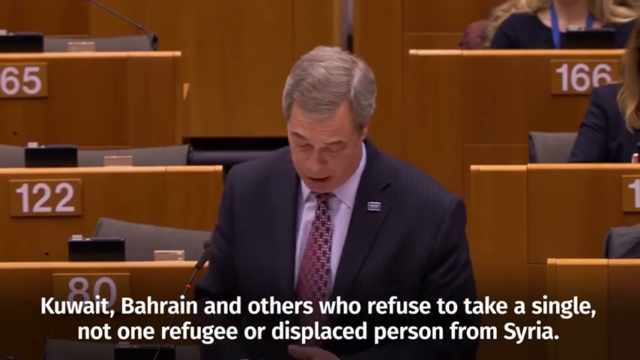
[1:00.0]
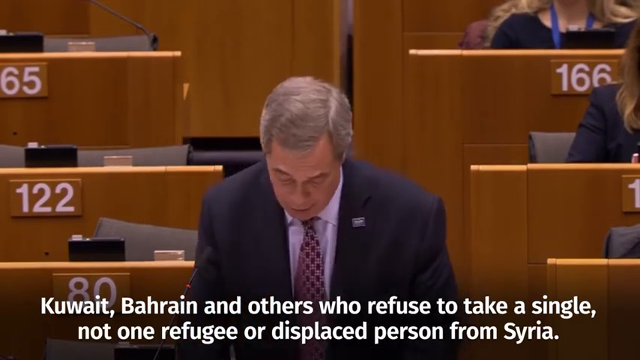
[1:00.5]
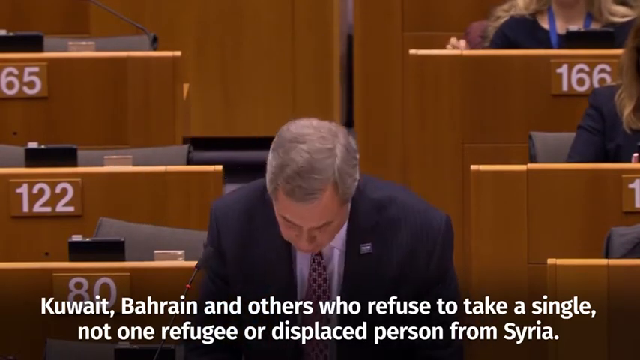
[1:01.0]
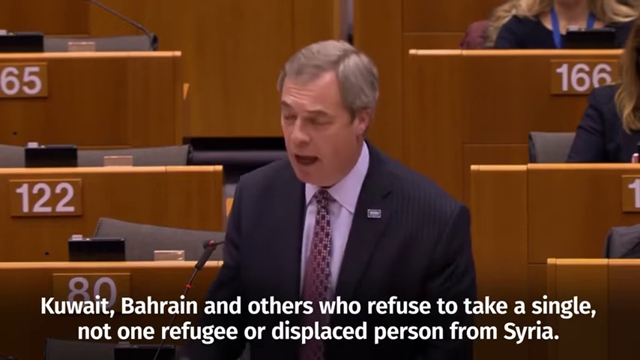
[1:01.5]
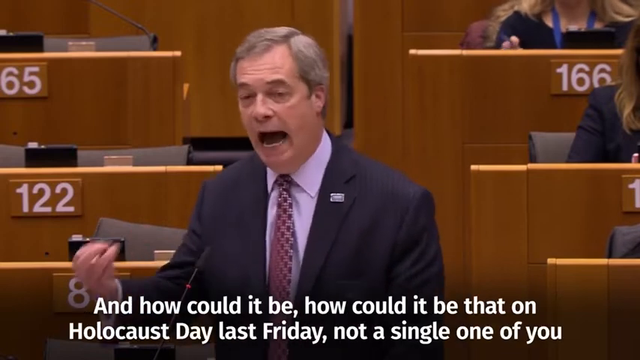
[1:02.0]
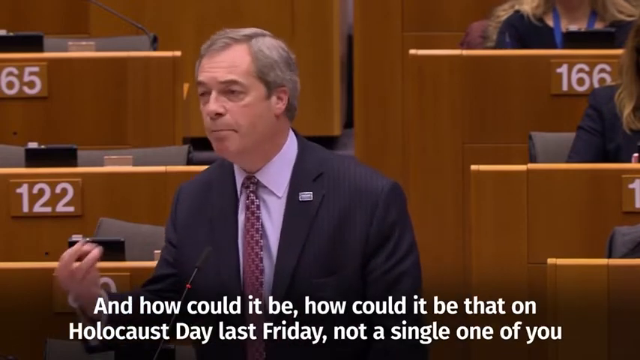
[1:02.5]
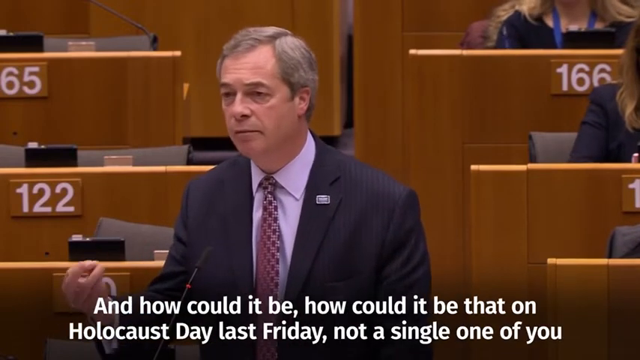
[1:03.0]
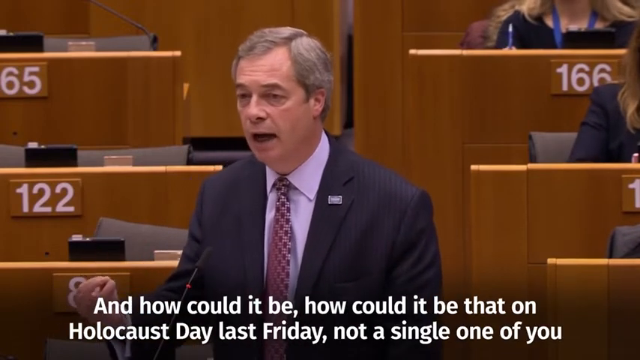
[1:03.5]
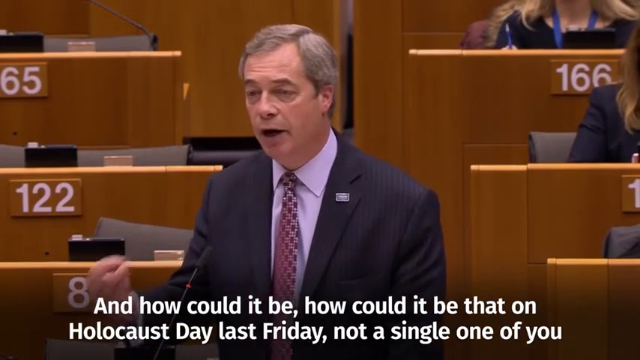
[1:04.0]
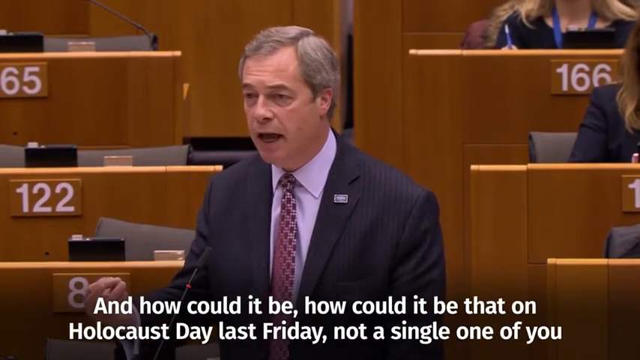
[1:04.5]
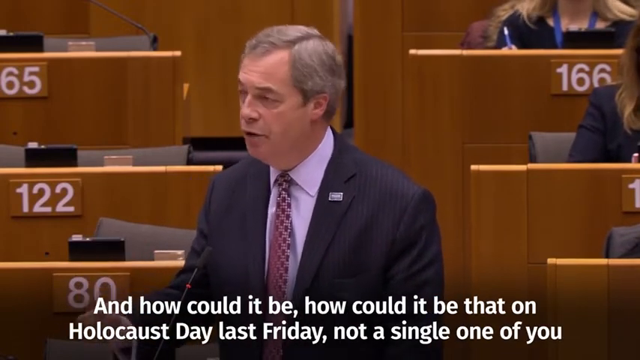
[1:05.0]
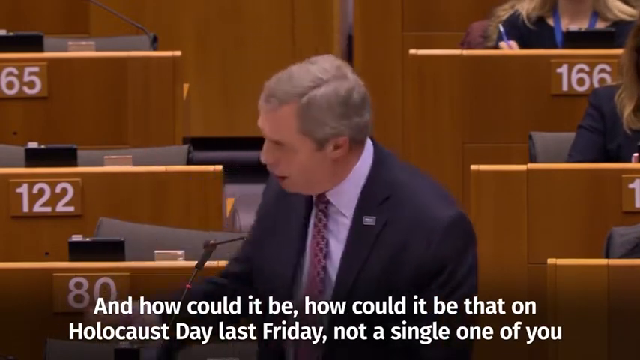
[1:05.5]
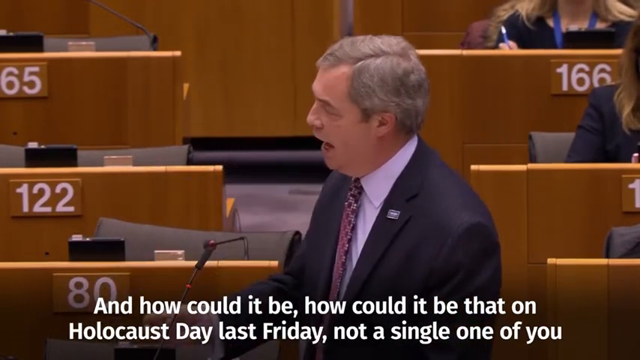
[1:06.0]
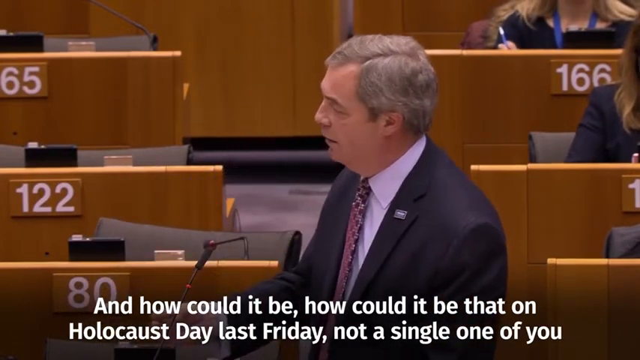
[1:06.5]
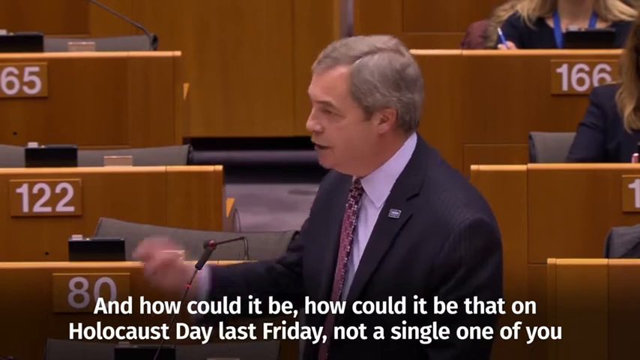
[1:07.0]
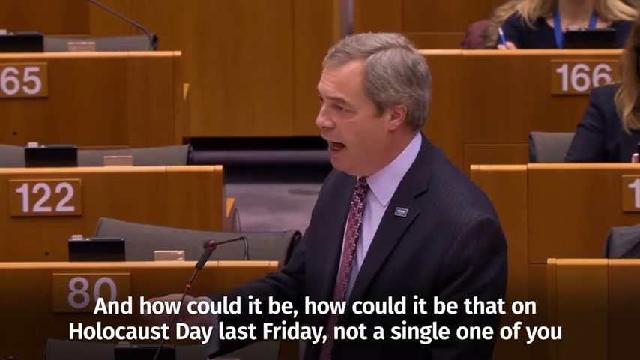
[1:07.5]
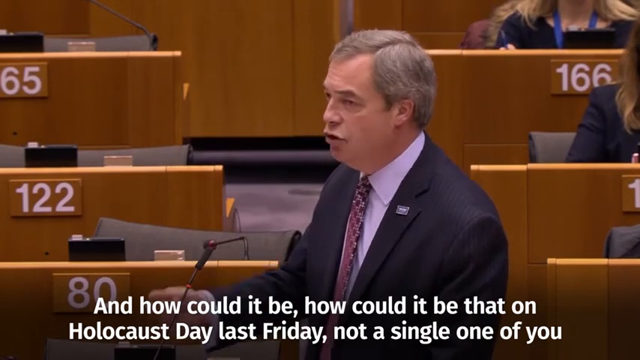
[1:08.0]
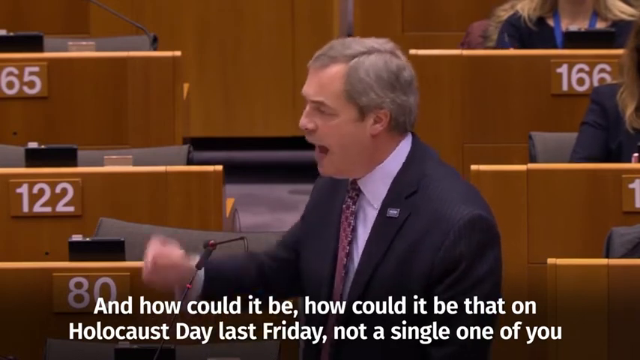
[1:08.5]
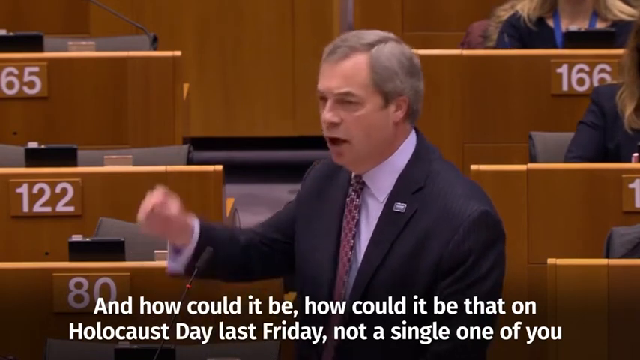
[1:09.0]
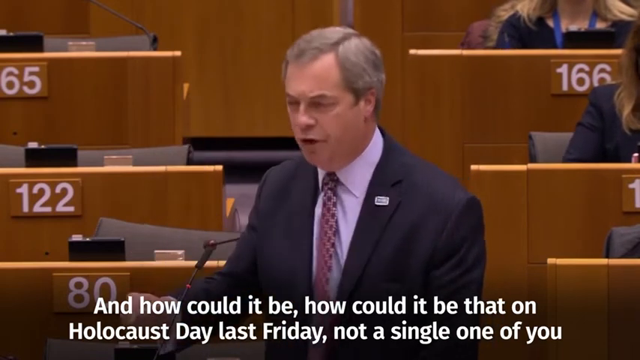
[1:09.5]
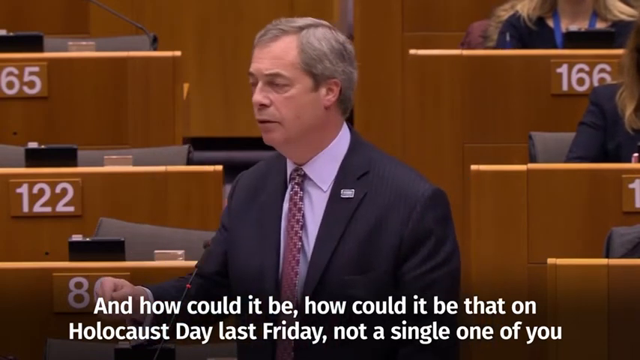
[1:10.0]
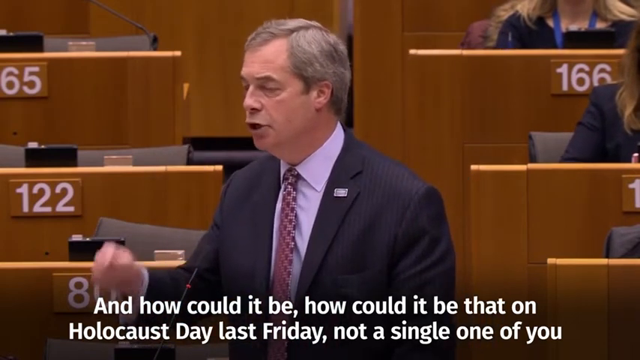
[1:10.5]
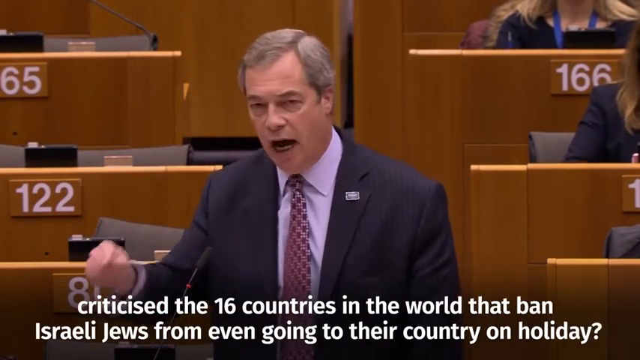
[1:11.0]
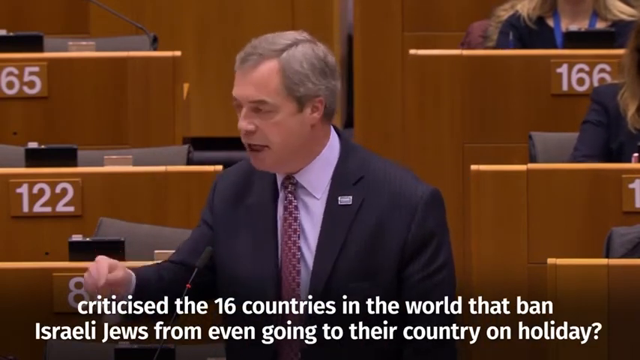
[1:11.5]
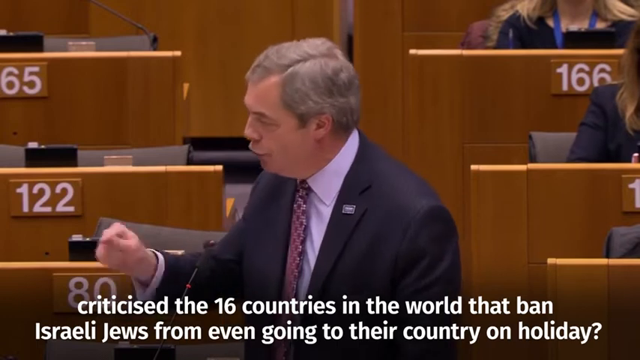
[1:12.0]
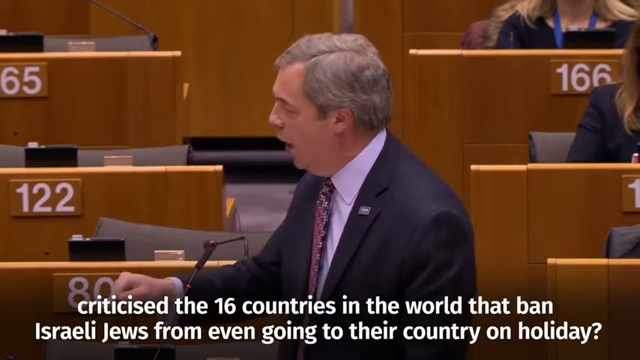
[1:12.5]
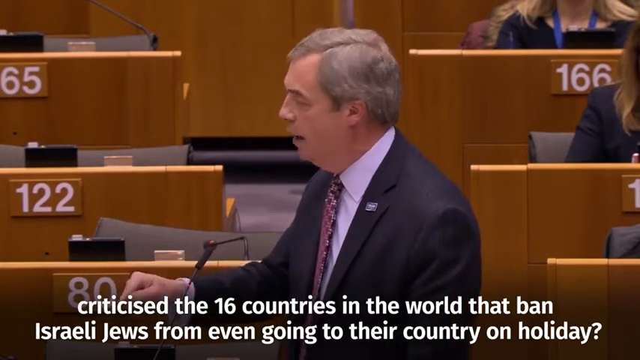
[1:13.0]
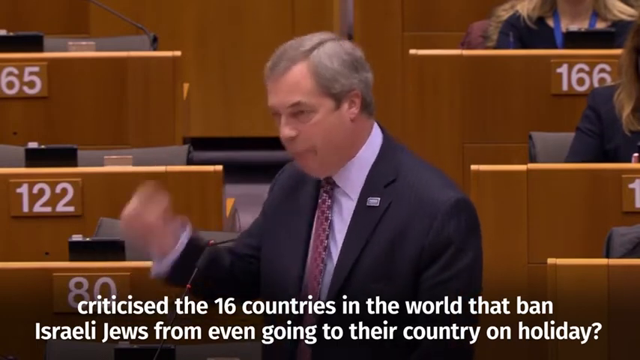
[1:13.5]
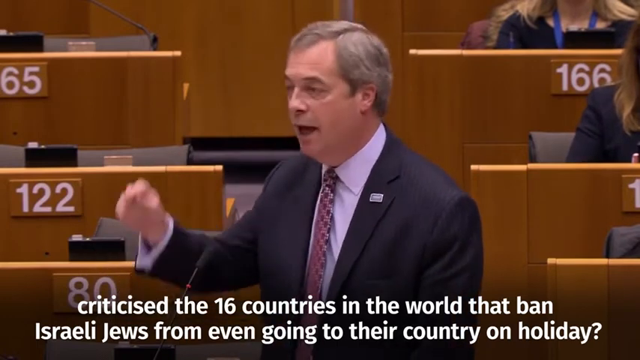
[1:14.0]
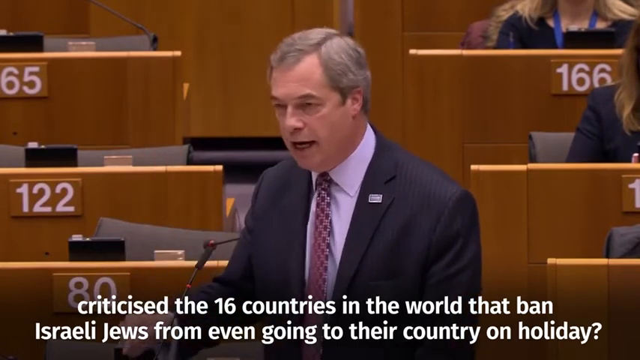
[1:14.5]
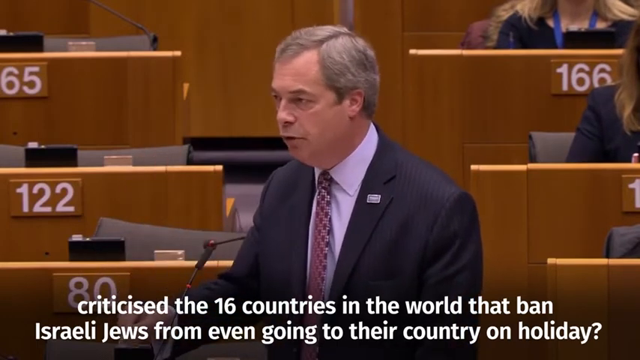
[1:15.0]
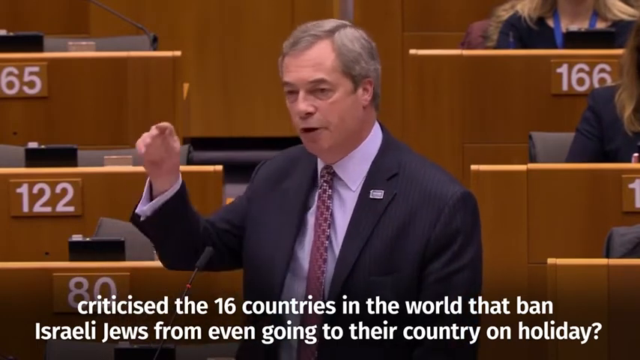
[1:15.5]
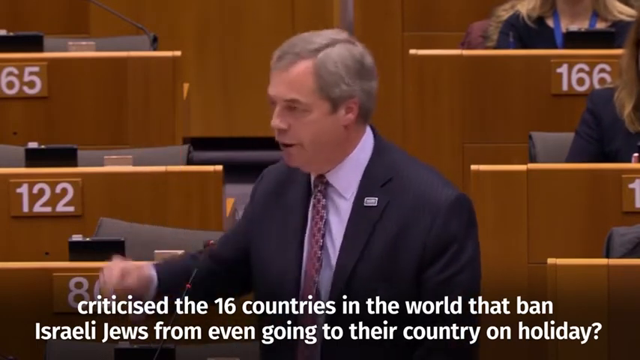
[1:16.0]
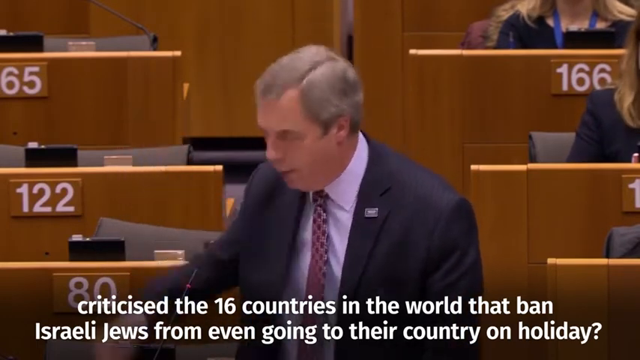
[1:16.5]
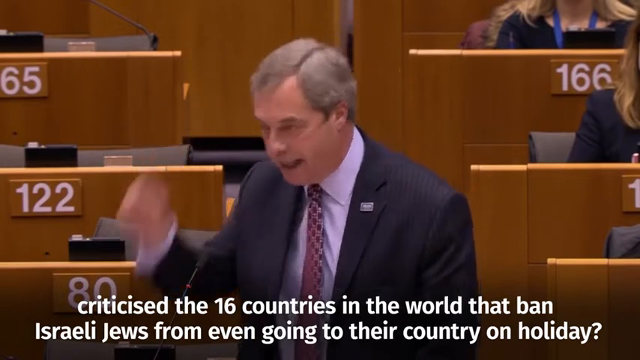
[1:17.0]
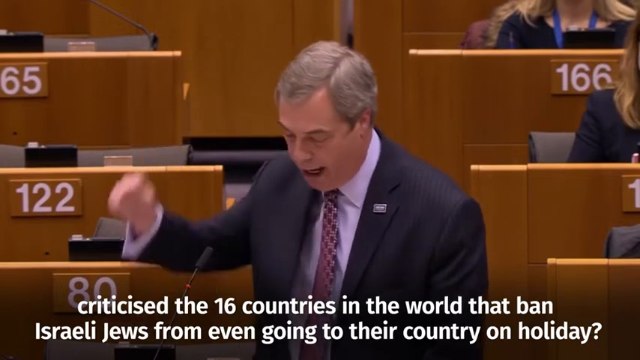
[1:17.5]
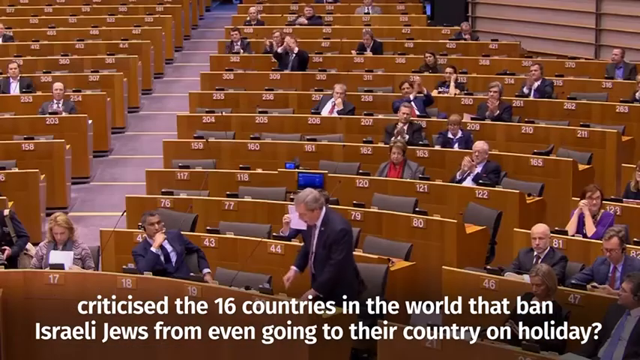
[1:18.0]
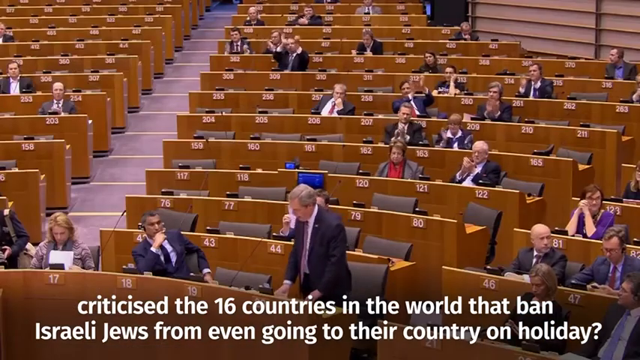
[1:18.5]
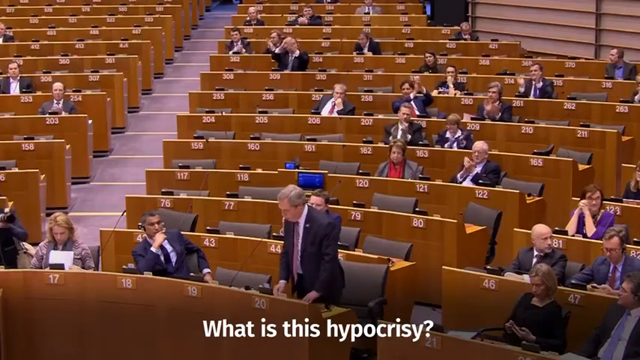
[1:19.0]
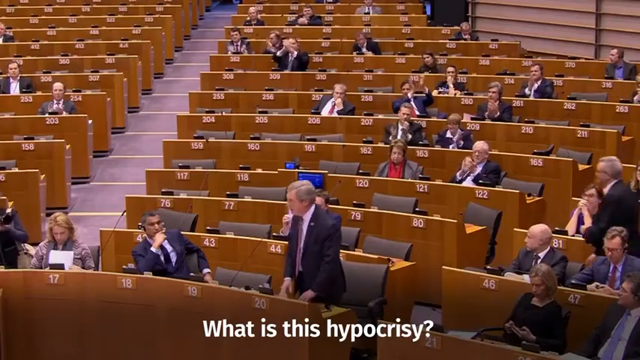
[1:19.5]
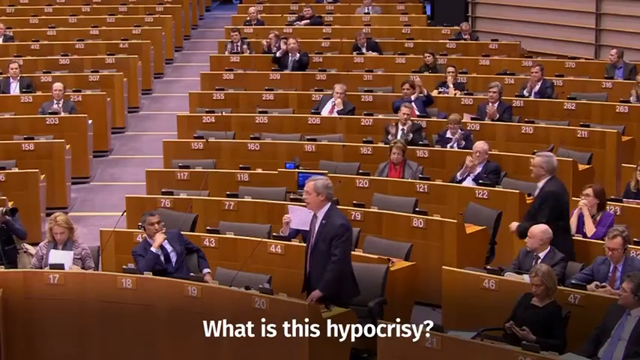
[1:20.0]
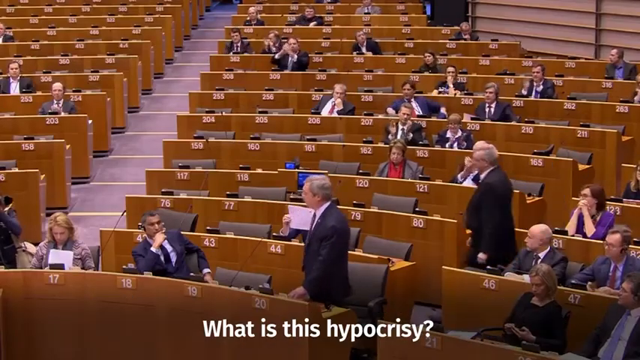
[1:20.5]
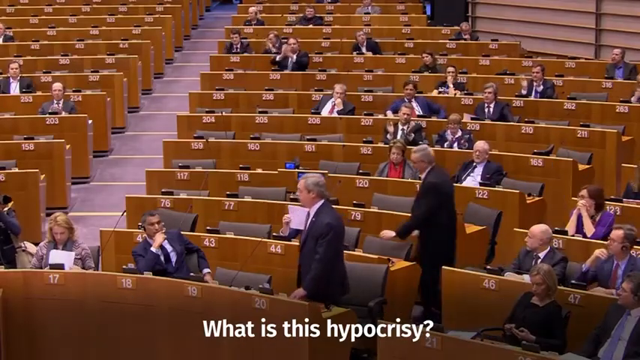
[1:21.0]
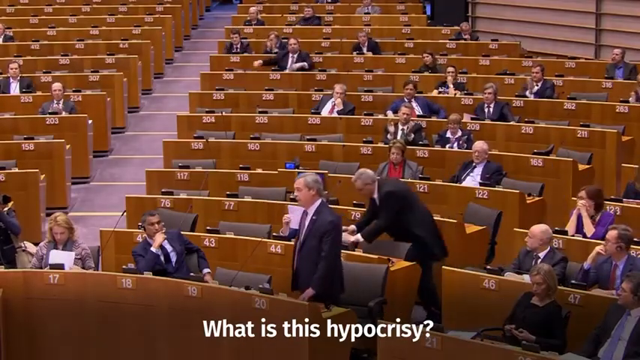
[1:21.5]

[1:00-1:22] A man gives a speech in a government room while people sit on benches, watching and trying to listen to the speech. Numbers are written in the background.